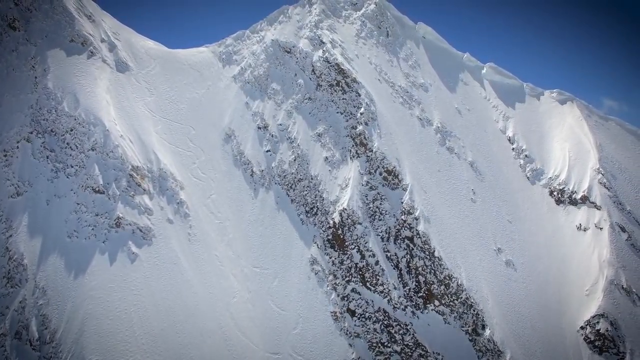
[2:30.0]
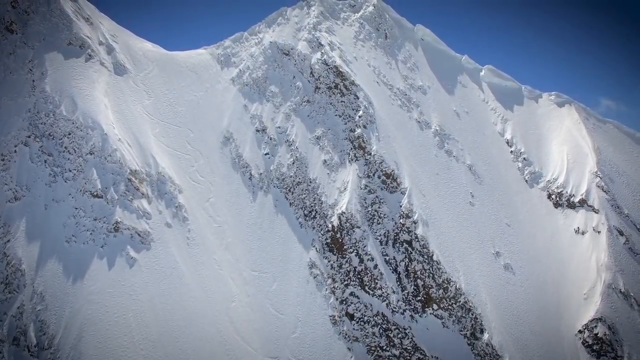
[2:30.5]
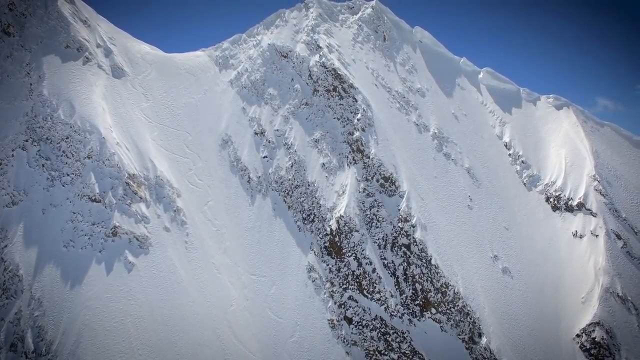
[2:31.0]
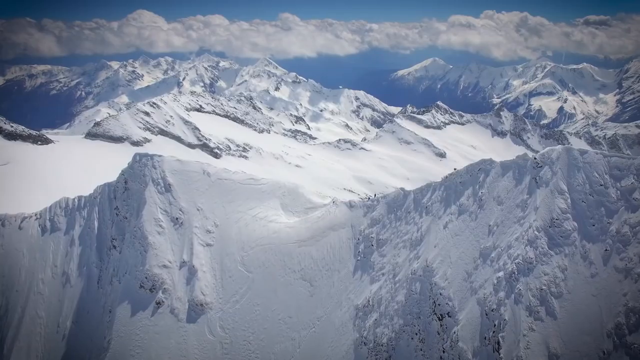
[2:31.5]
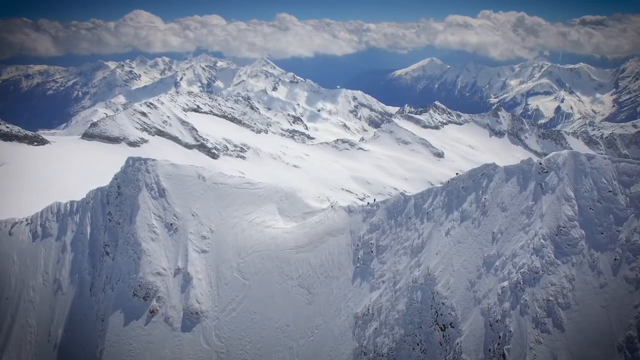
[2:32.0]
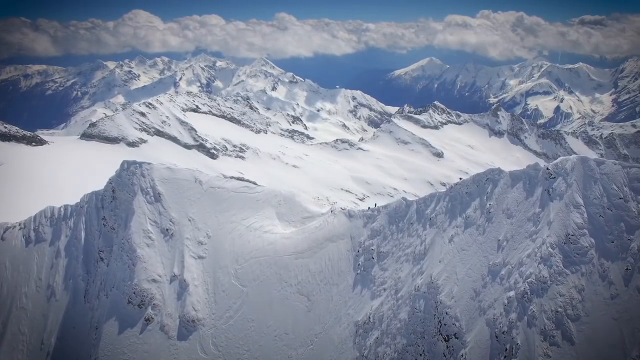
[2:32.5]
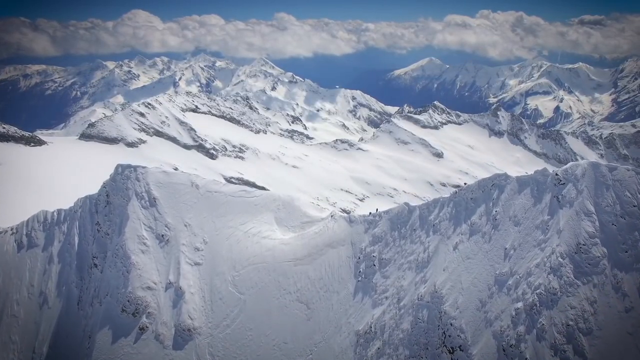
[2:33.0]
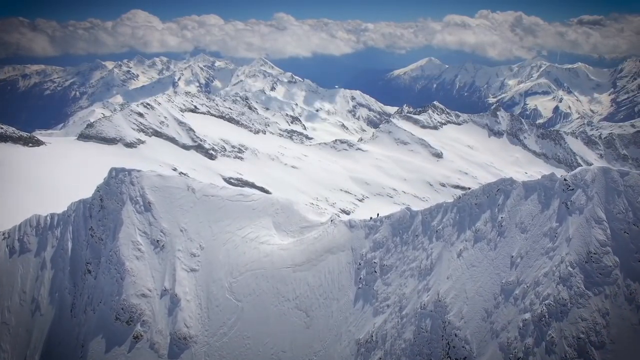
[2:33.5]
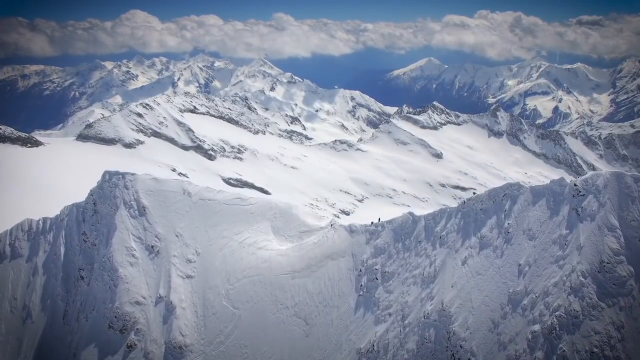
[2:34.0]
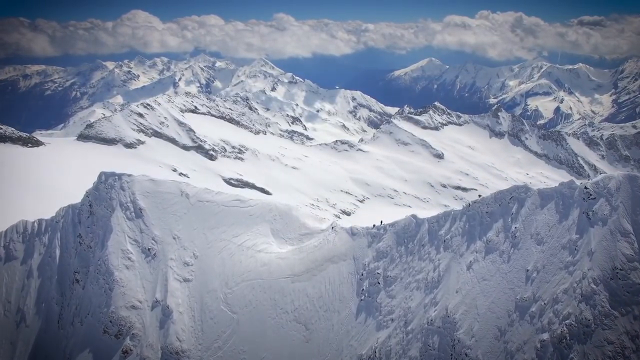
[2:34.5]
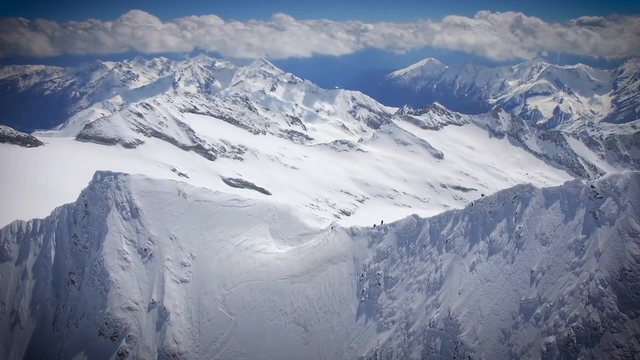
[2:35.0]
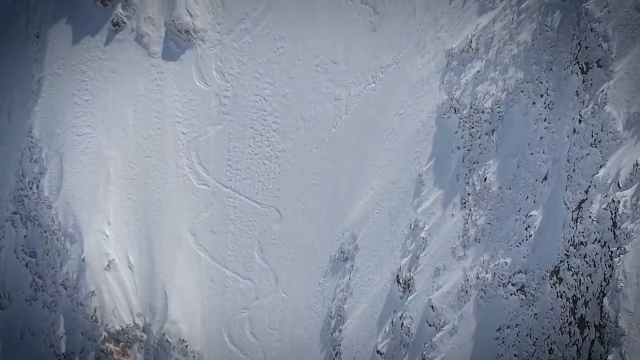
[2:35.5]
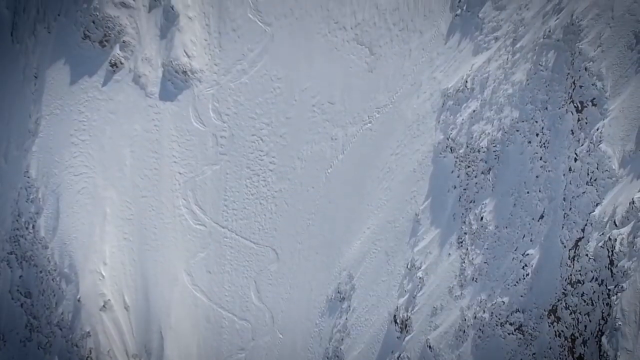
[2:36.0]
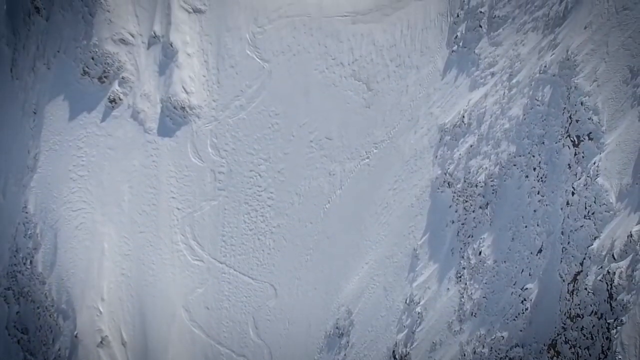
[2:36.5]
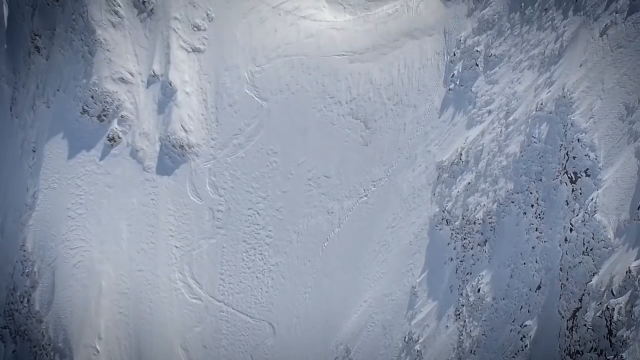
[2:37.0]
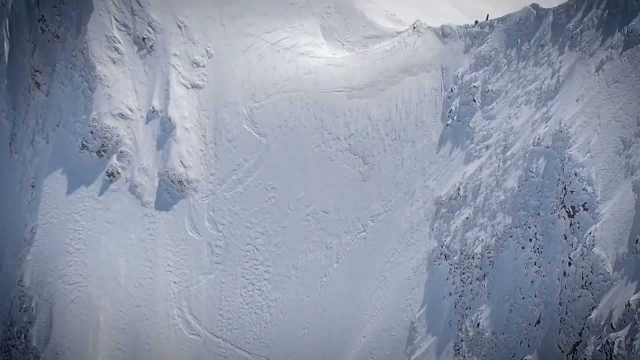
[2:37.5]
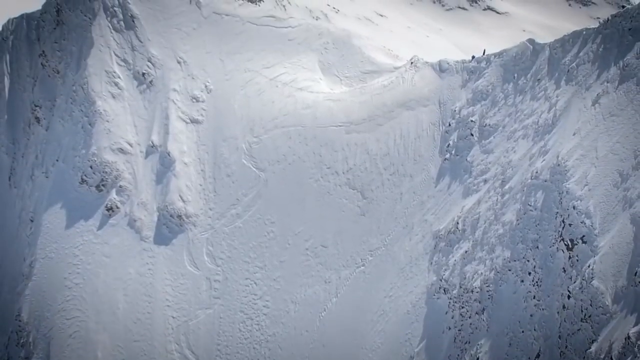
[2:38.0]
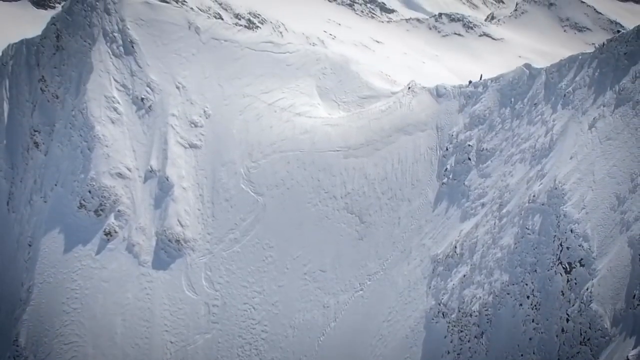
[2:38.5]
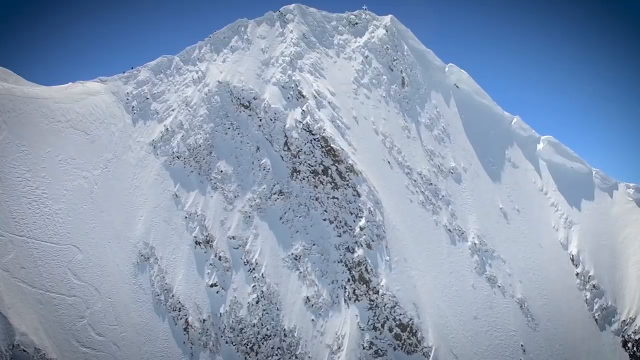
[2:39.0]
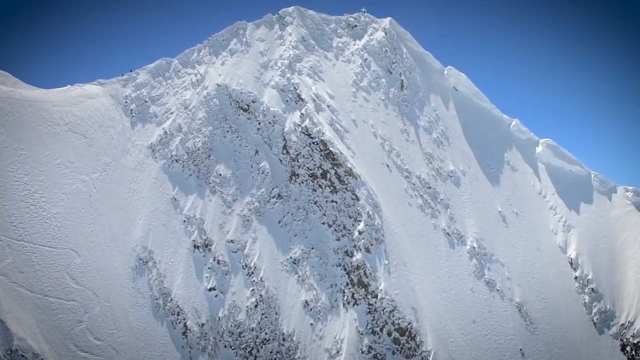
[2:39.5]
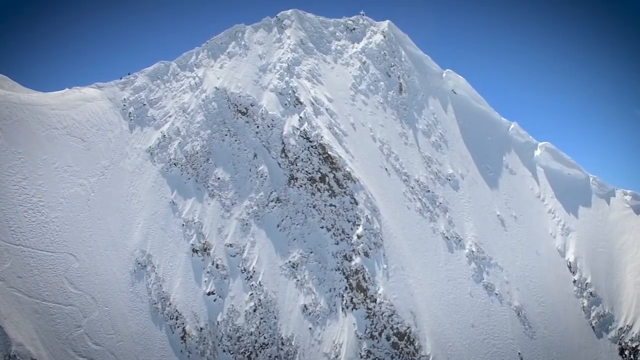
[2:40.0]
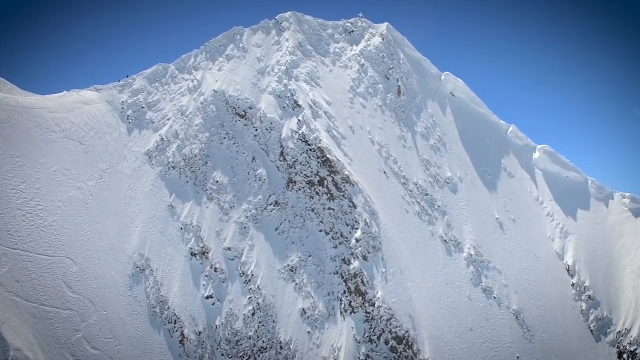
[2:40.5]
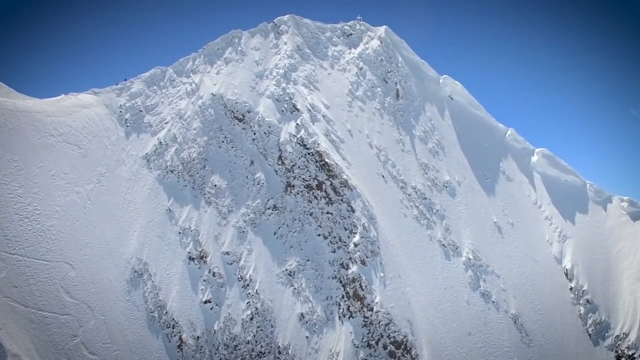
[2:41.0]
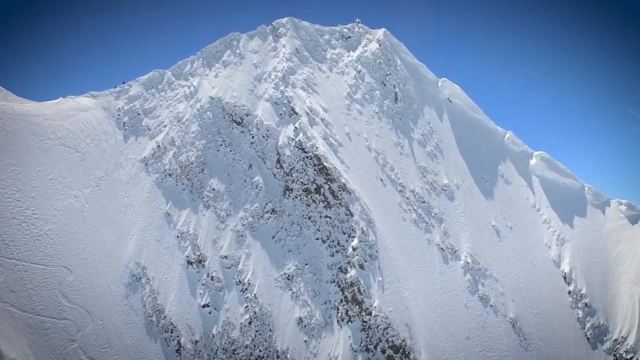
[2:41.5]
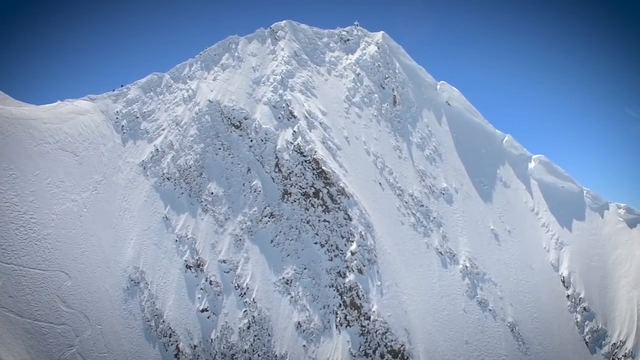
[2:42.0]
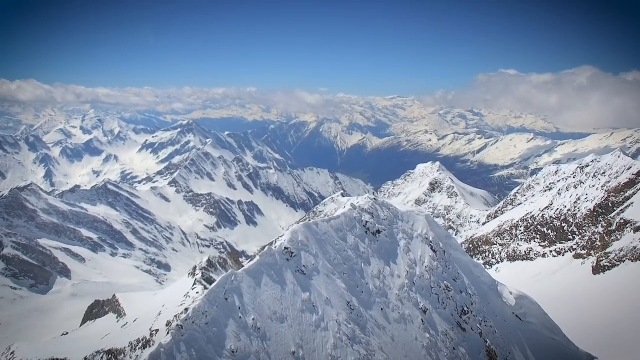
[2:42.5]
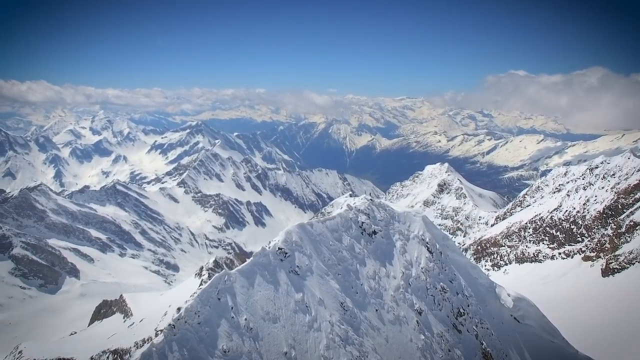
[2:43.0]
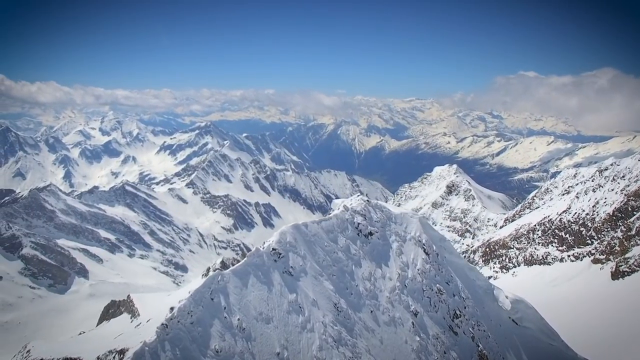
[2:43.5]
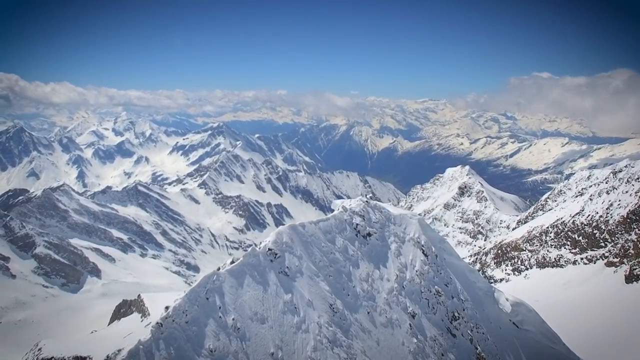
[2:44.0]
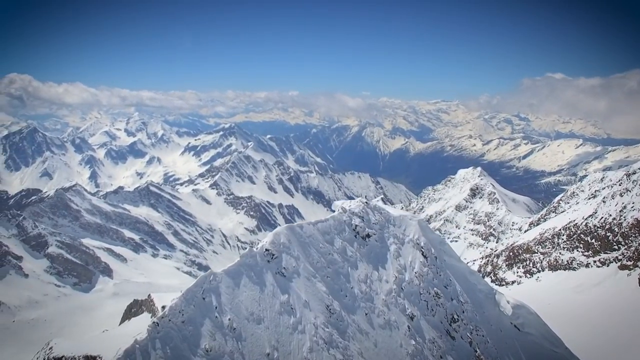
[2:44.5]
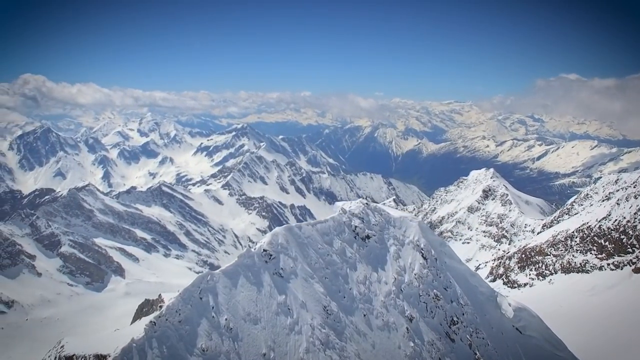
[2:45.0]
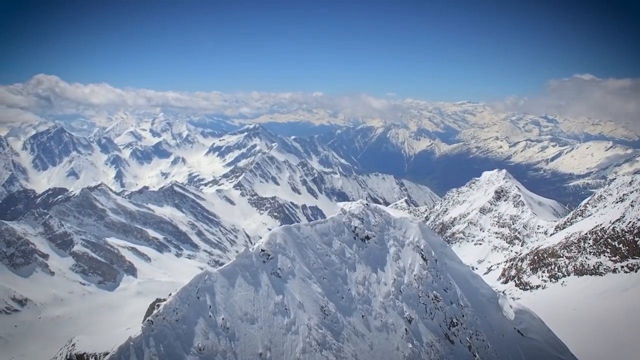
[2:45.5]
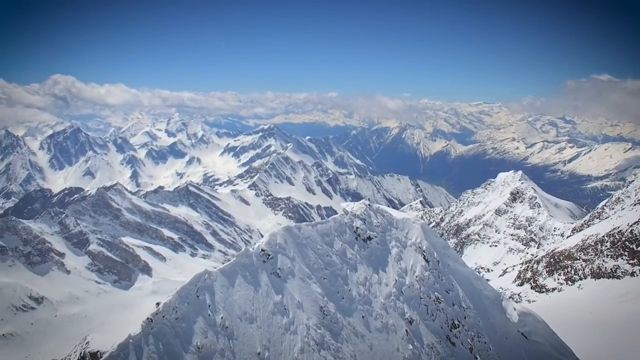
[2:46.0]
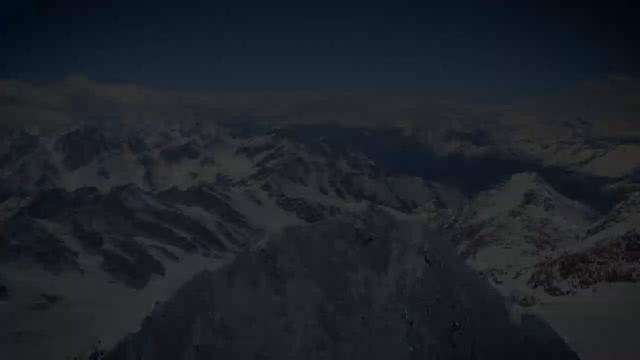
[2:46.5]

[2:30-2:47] The view is at the top of a very high mountain, with patches that seem to be covered in clean, white ice. The mountain range is shown very white, and clouds seem to hang high above the mountains. The mountains seem to occupy a large area almost the size of a city. Beneath the clouds there are dark spots from the shadows of the clouds hanging just above the mountains. There seem to be trails from multiple people who have been skating on this mountain, and the trails seem to be recent rather than old.